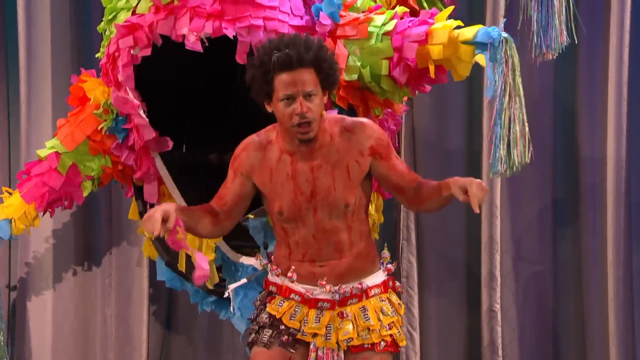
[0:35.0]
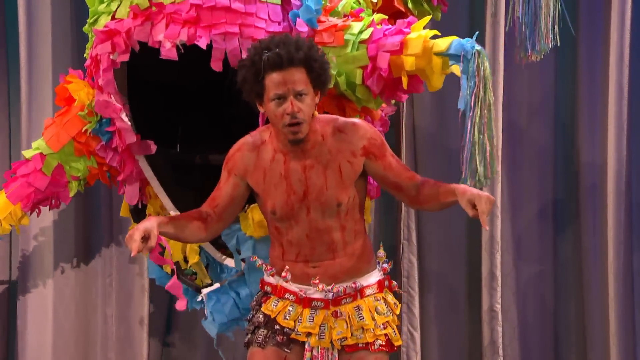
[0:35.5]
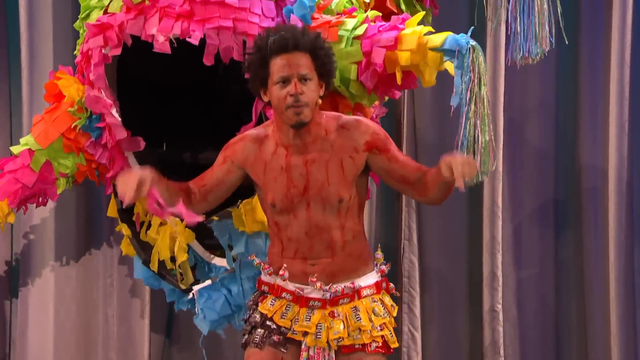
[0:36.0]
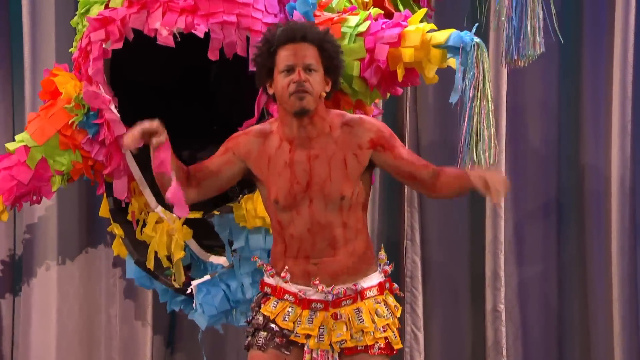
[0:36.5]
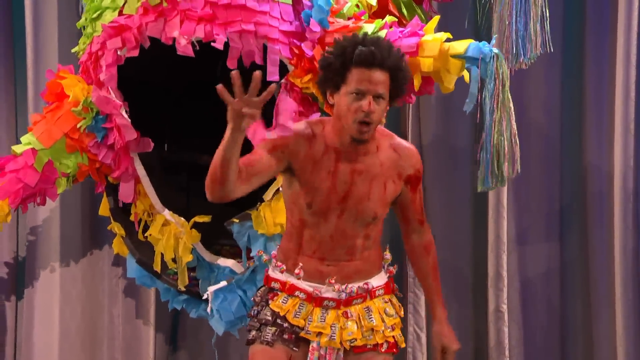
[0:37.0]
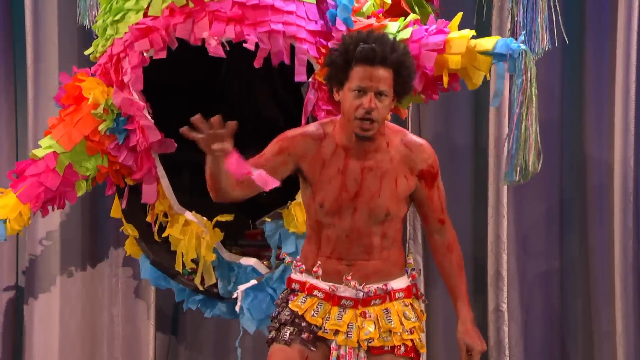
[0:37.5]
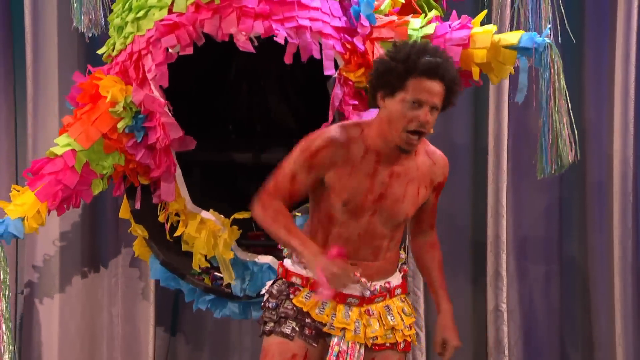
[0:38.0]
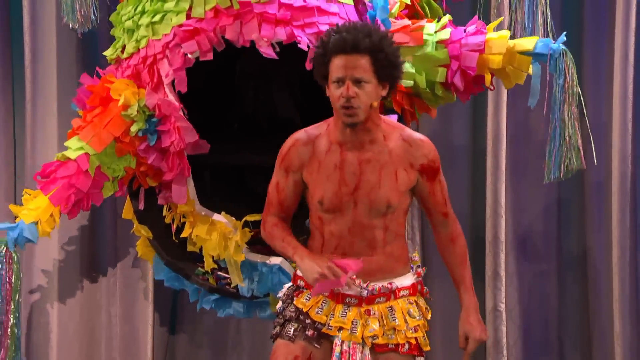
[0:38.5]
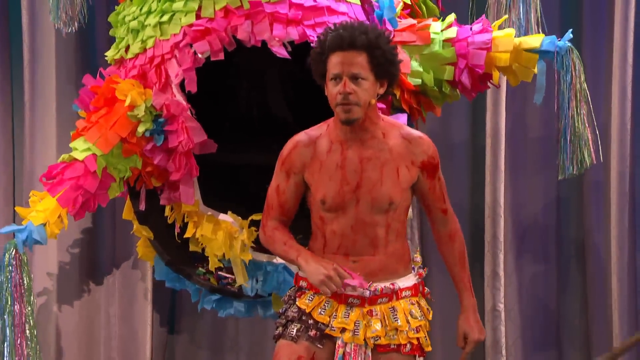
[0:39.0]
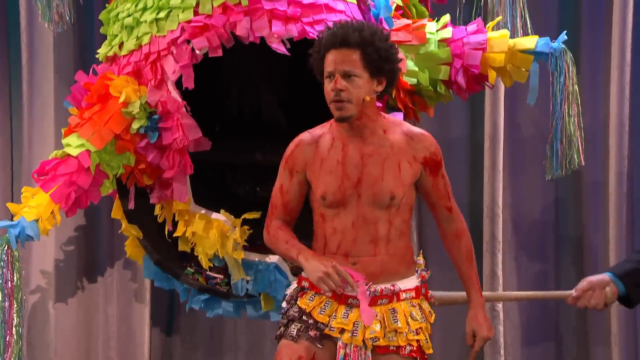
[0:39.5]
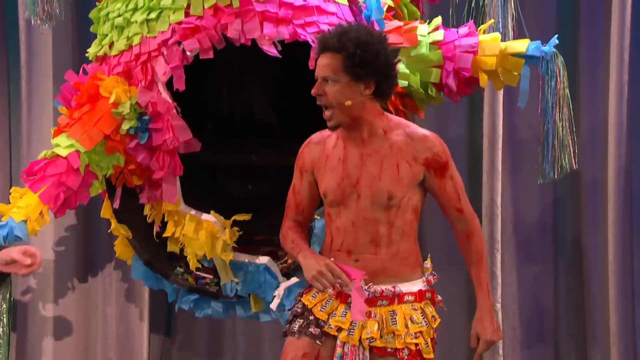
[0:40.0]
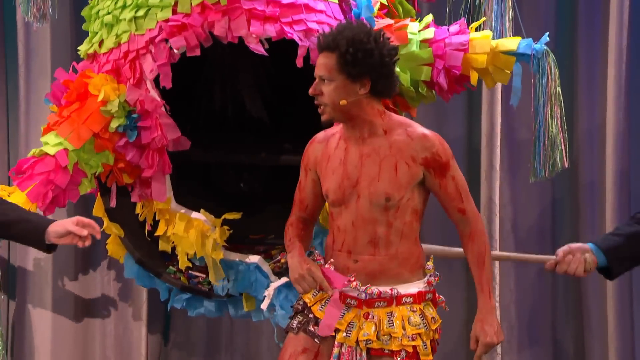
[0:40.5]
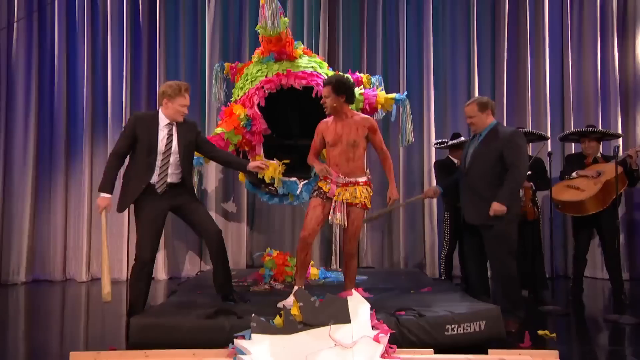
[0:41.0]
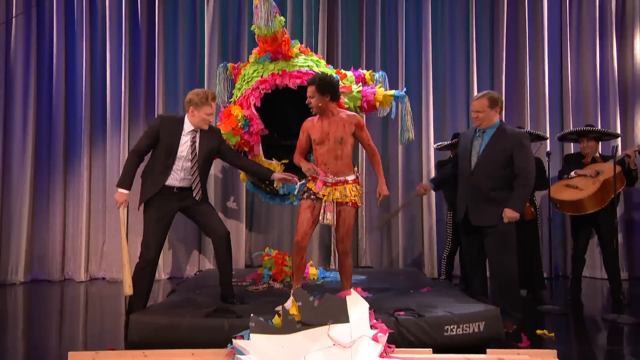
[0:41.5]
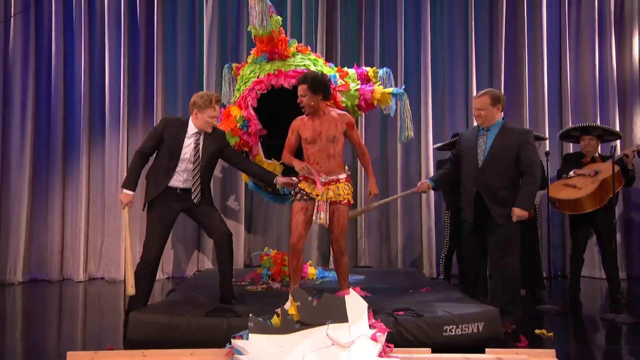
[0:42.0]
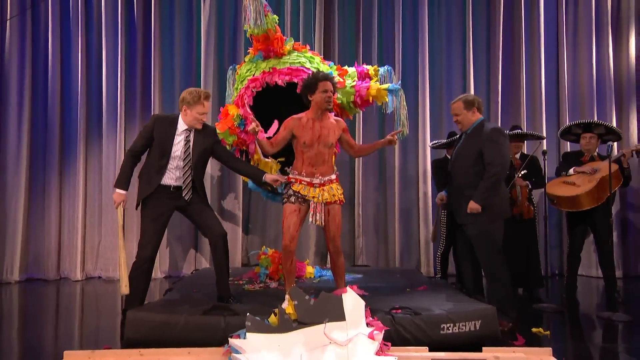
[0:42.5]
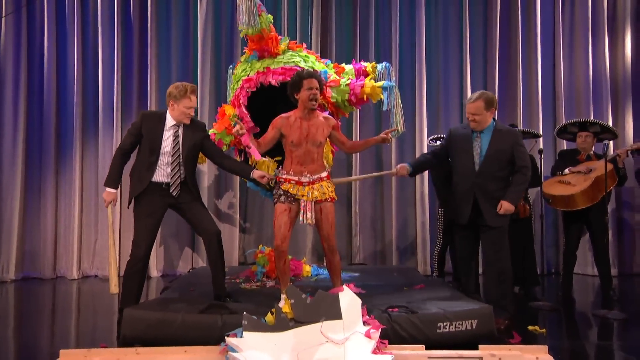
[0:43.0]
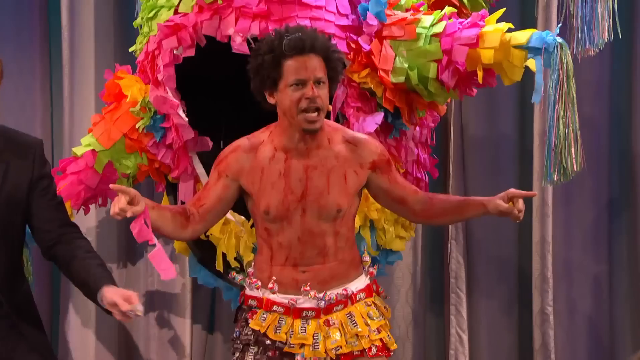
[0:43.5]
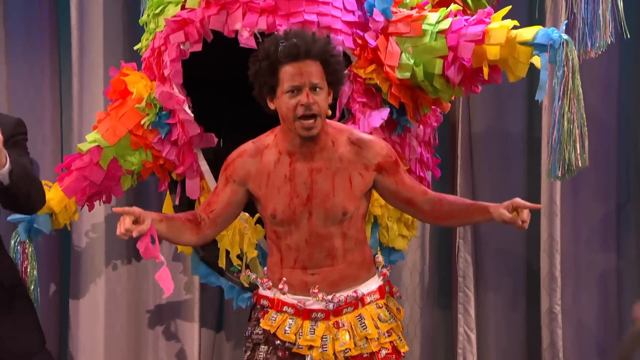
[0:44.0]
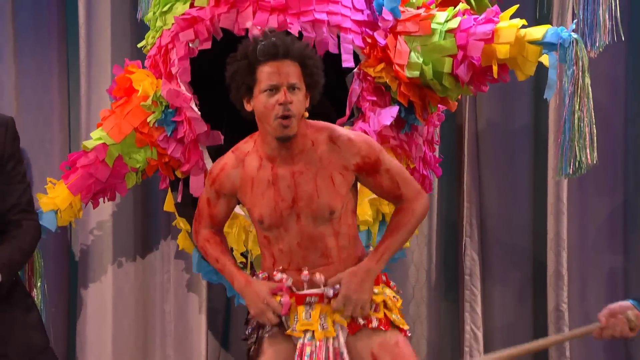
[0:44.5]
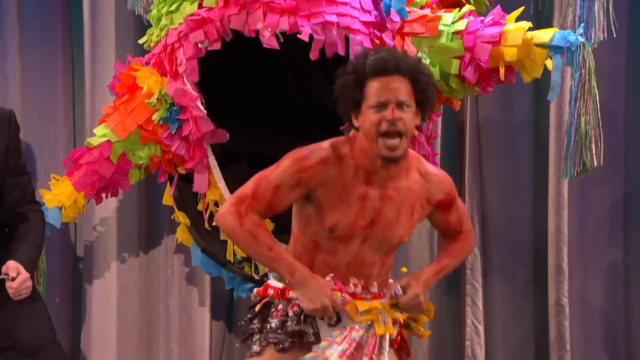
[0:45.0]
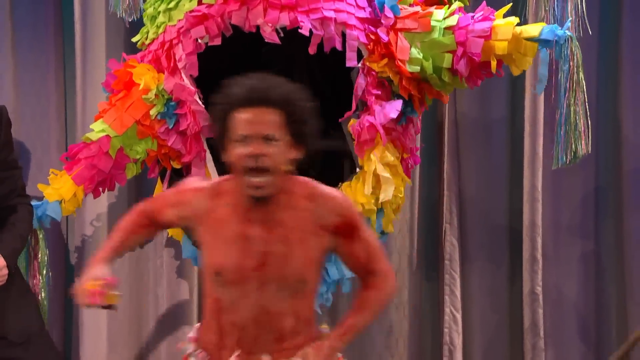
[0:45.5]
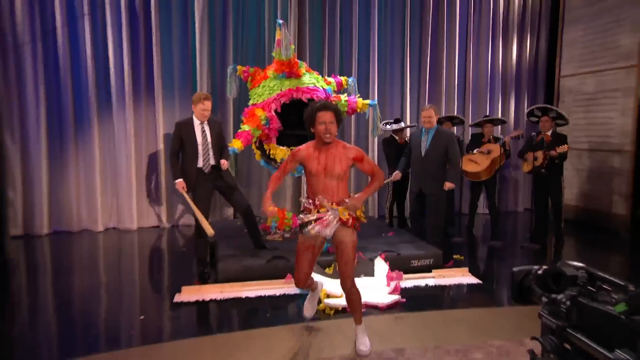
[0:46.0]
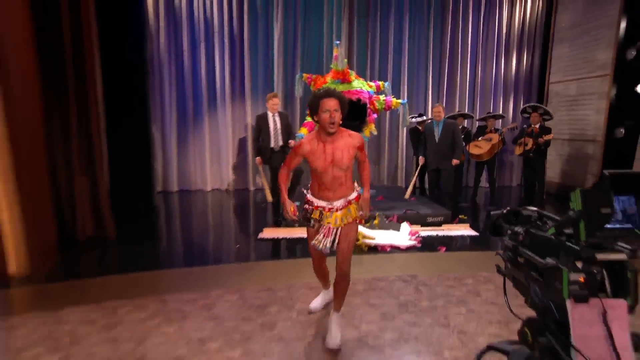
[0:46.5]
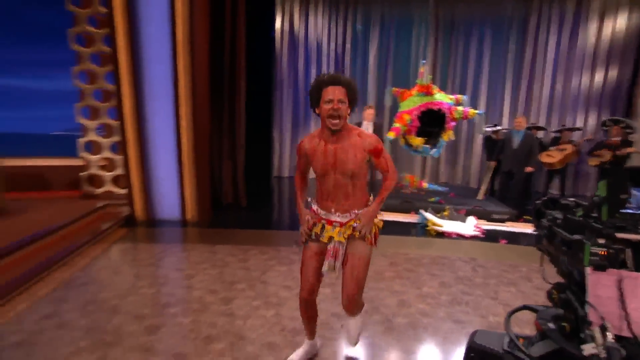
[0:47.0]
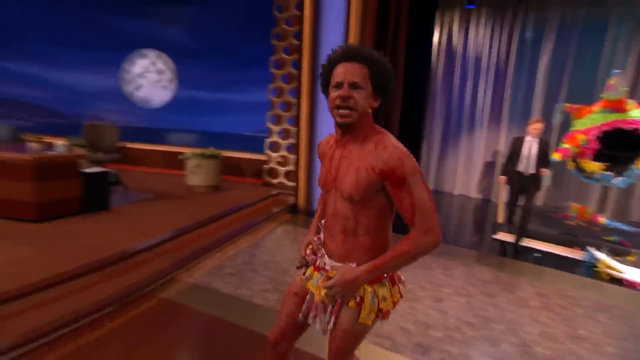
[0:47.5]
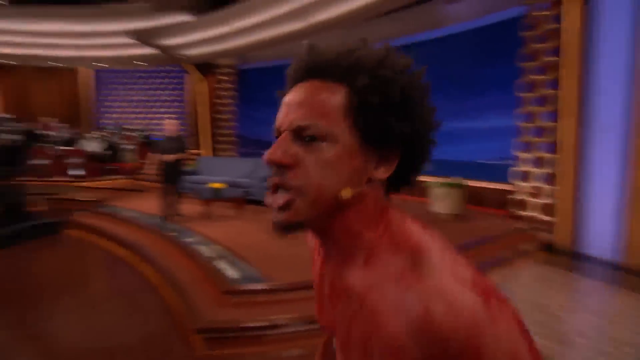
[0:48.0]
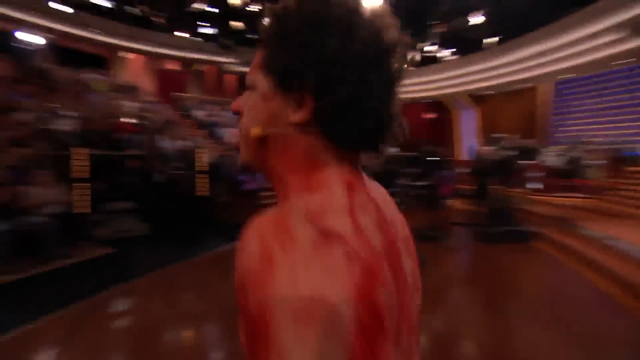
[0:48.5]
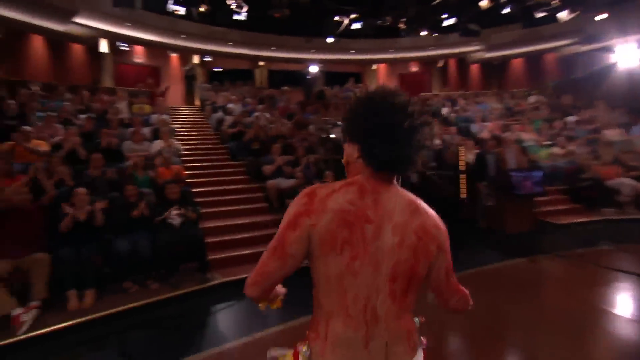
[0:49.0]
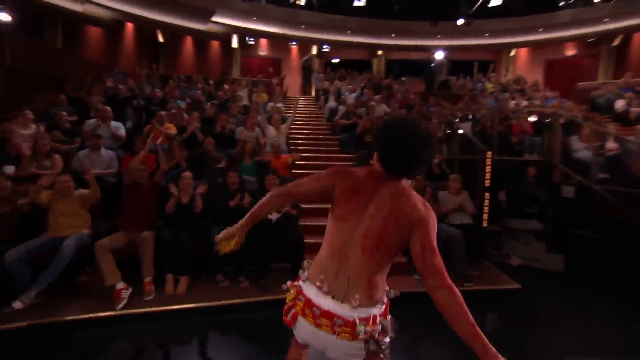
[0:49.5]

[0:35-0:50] The man who emerged from the piñata has paint streaking his naked torso and an afro. He looks upset and points his hands in annoyance. Around his waist is some sort of loincloth made of yellow fabric and other items tied around his waist. The piñata is very colorful, in blue, yellow, pink, green and other colors. The man punches the air with his right hand and talks as if he is upset. To his right, the large man in a dark suit uses the baseball bat to tap the man behind him as the man from the piñata continues talking in annoyance. The man from the piñata hitches up his loincloth and runs into the audience, which reacts with laughter. He looks like he is protesting about something. He wears a pair of white socks or white sneakers with his bare chest and loincloth. On closer look, the yellow loincloth seems to be made of yellow packs of candy that seem to be M&Ms.